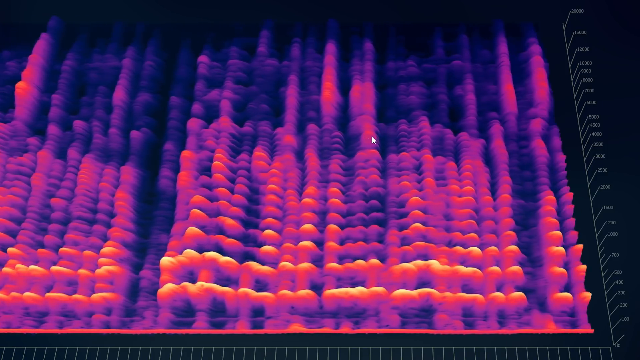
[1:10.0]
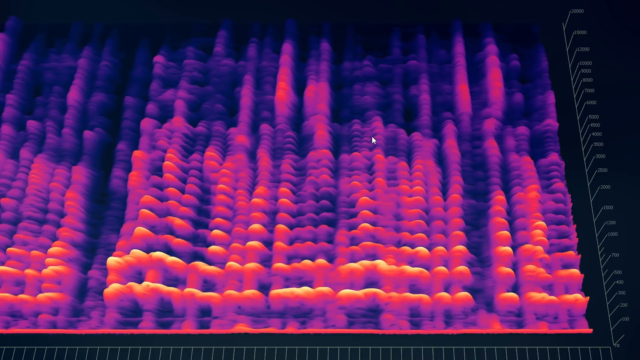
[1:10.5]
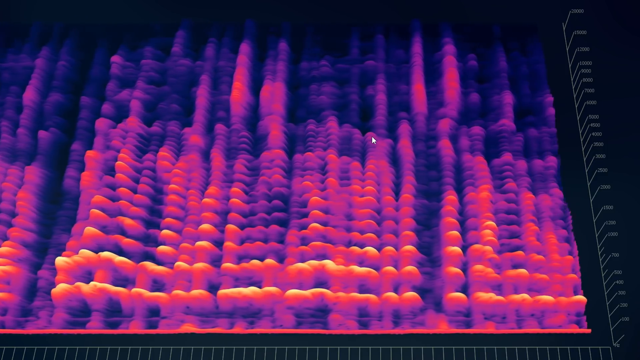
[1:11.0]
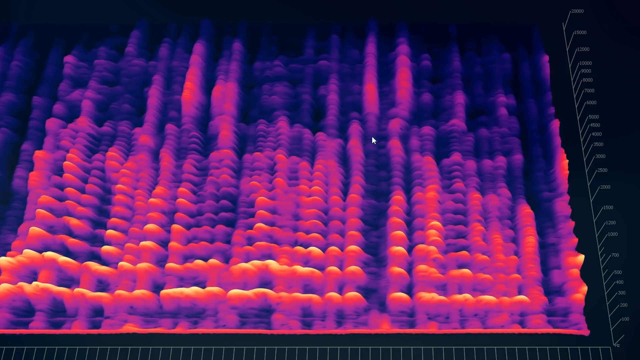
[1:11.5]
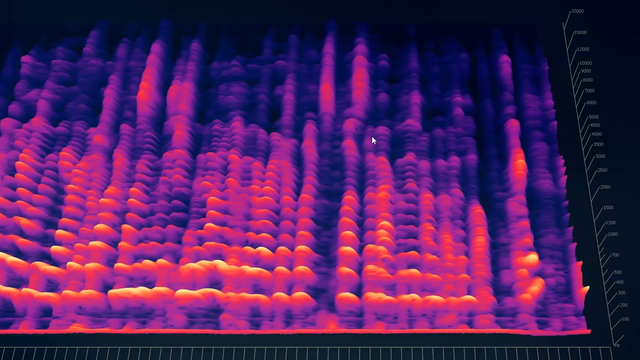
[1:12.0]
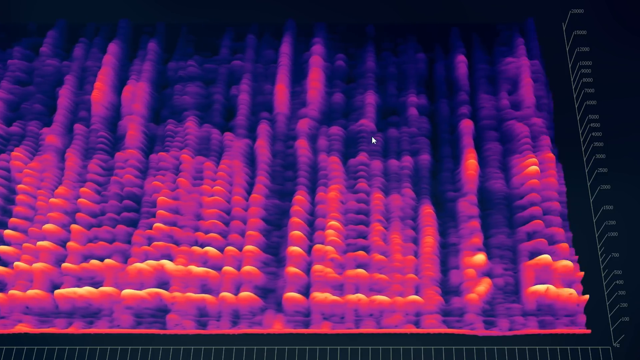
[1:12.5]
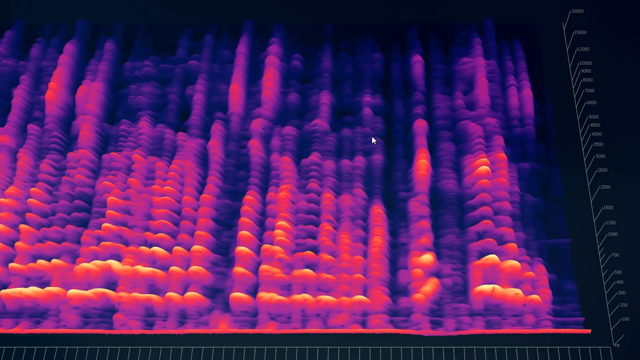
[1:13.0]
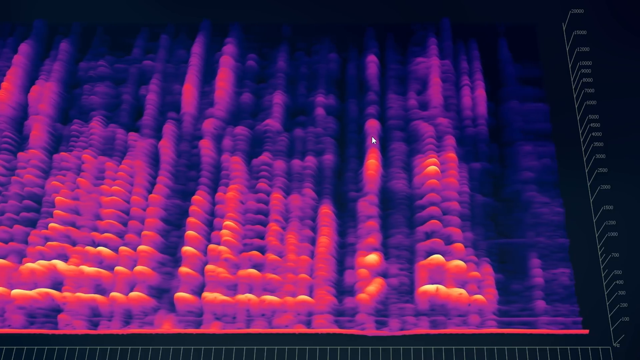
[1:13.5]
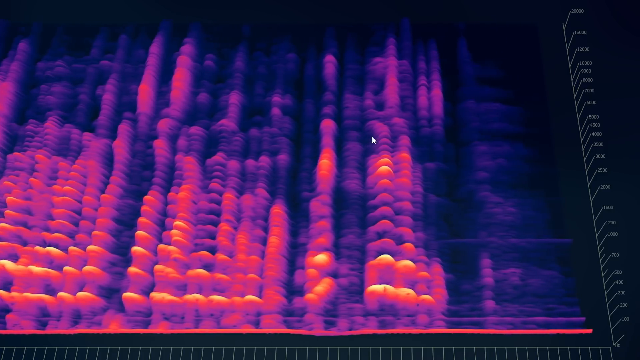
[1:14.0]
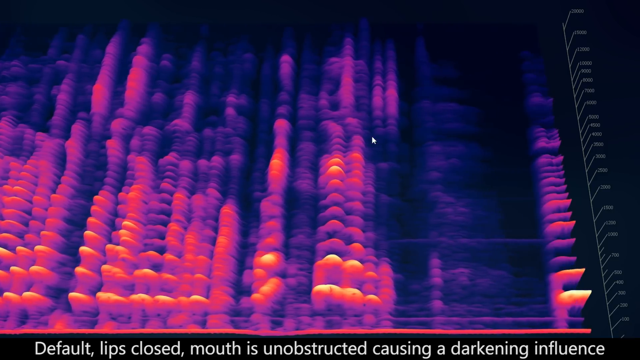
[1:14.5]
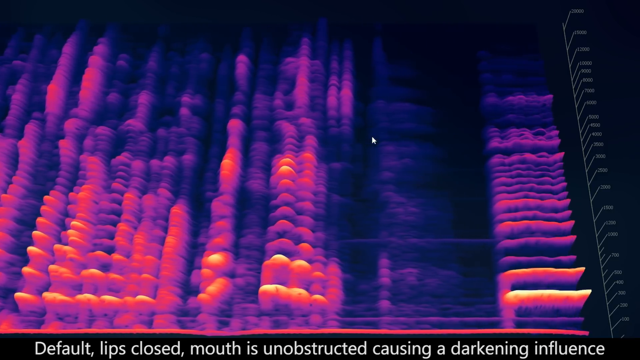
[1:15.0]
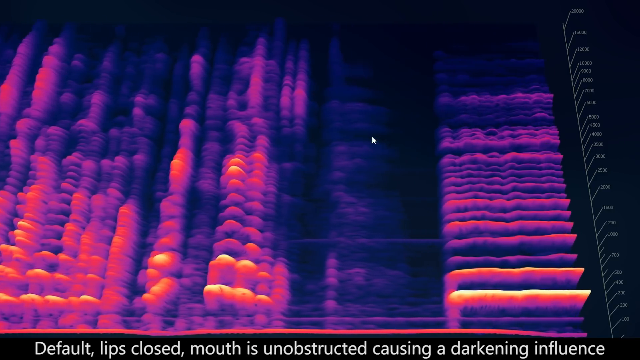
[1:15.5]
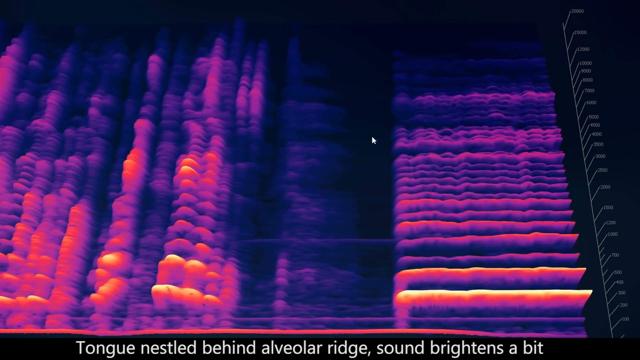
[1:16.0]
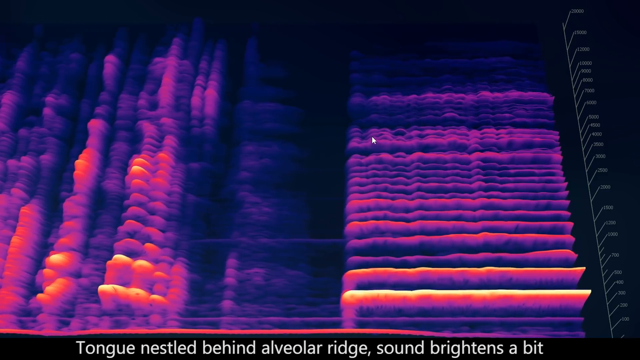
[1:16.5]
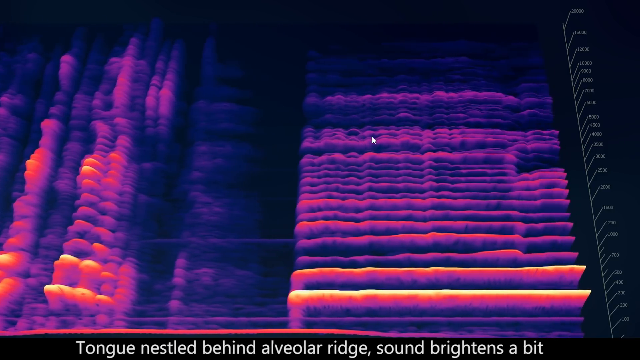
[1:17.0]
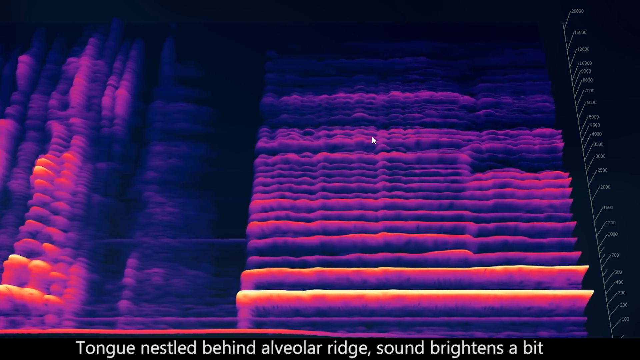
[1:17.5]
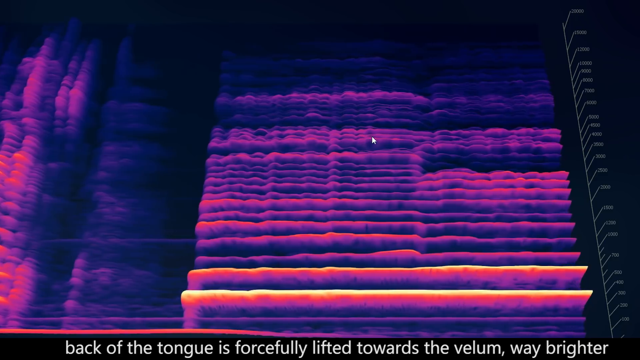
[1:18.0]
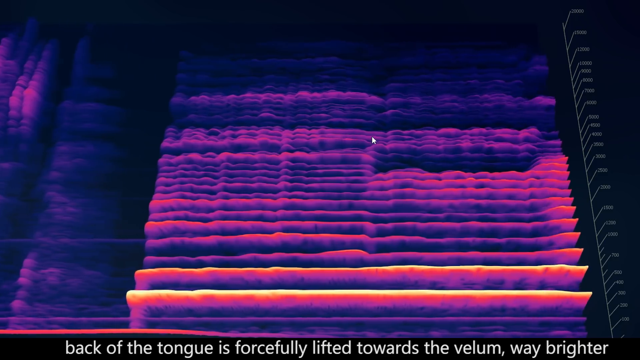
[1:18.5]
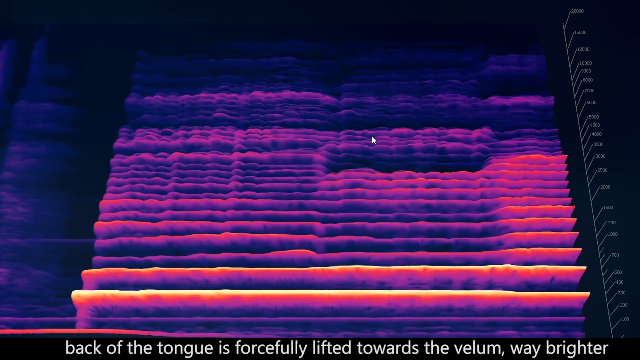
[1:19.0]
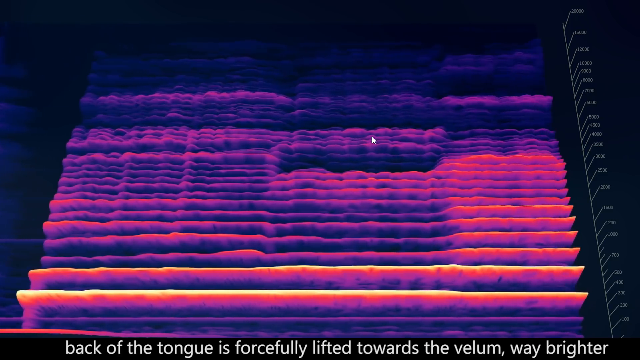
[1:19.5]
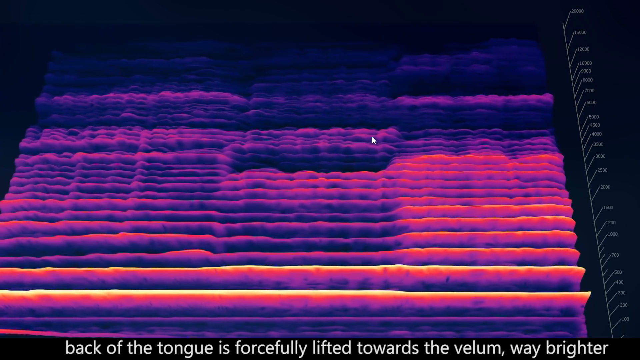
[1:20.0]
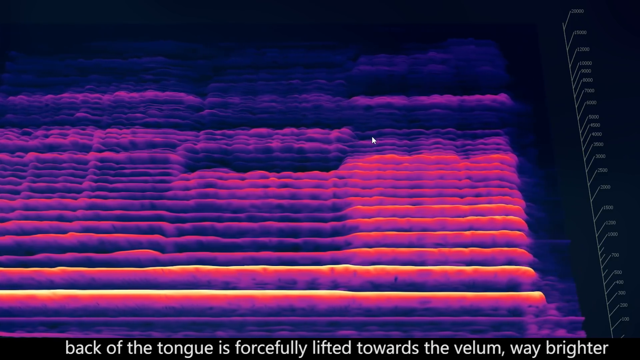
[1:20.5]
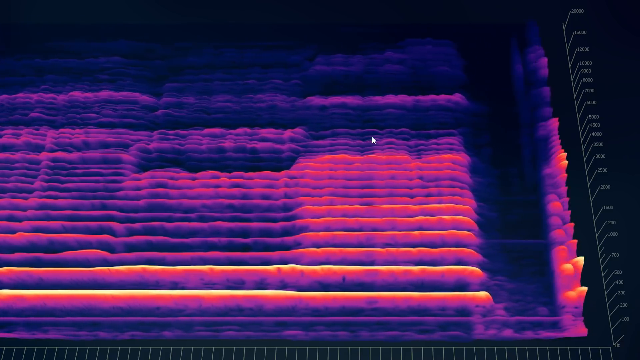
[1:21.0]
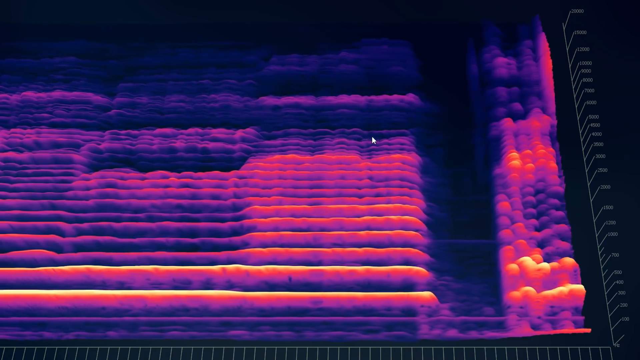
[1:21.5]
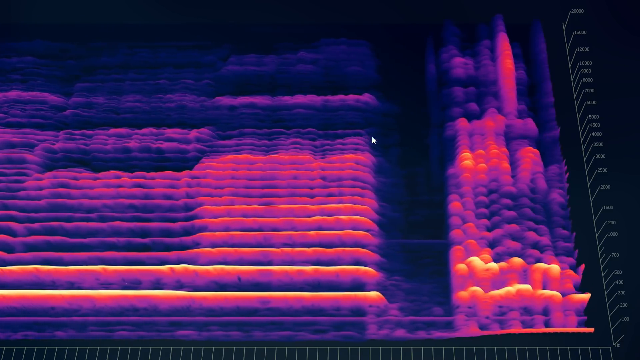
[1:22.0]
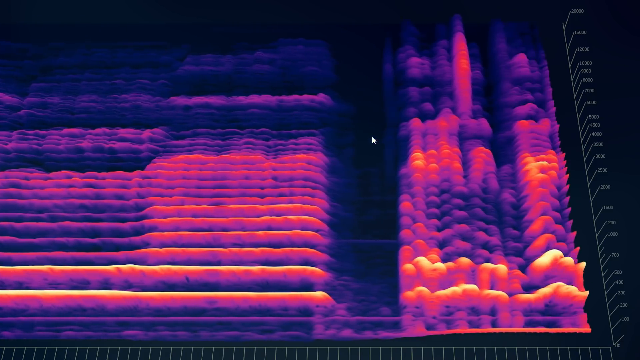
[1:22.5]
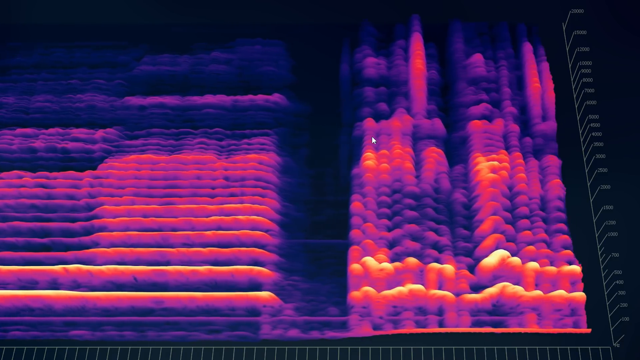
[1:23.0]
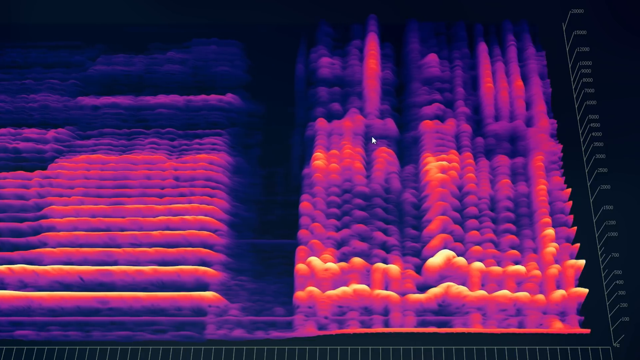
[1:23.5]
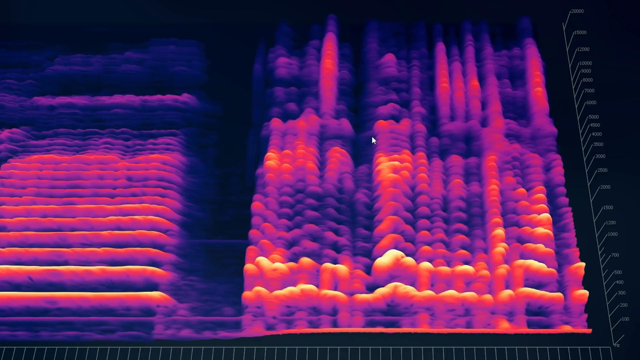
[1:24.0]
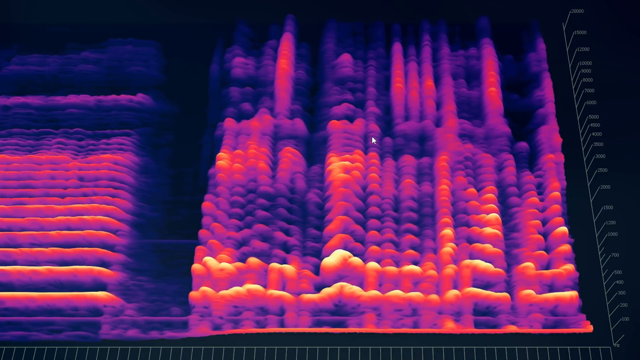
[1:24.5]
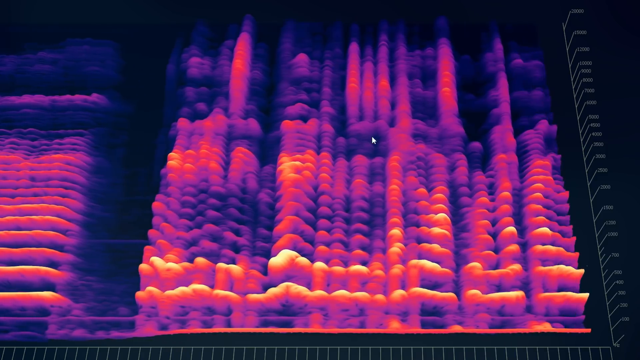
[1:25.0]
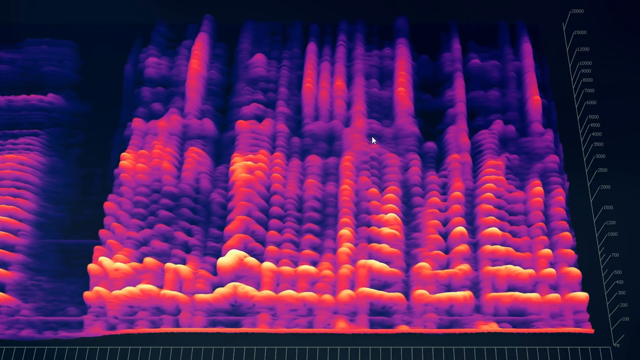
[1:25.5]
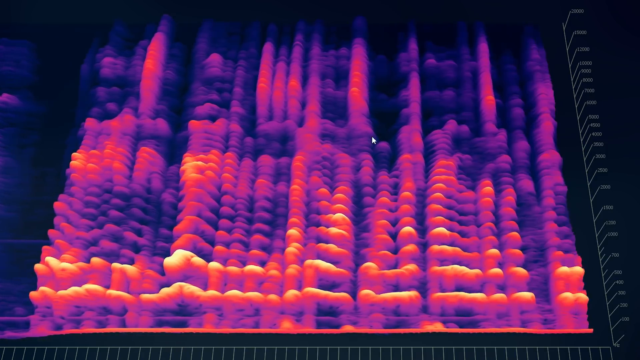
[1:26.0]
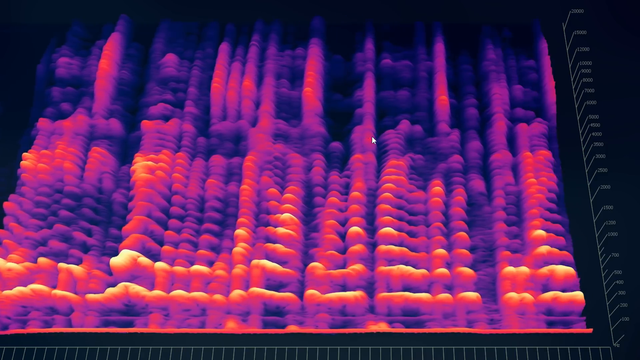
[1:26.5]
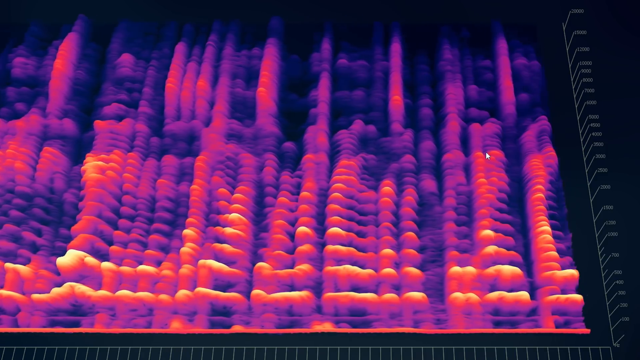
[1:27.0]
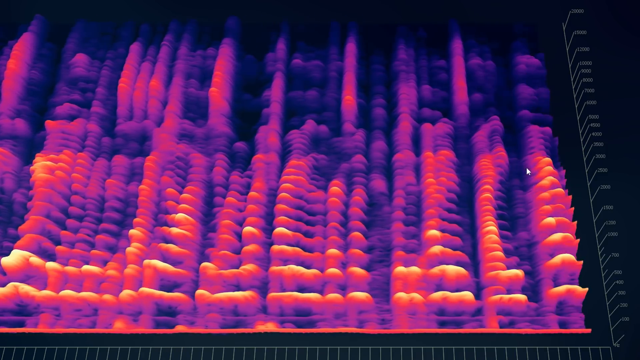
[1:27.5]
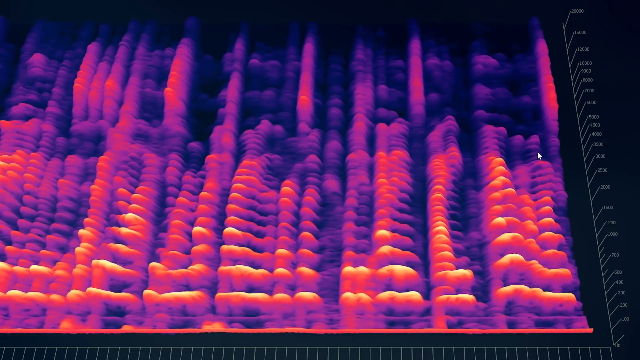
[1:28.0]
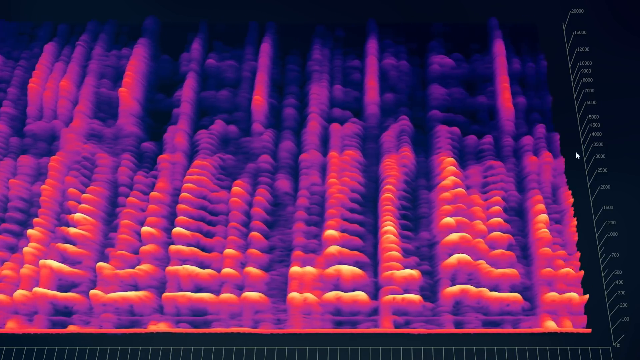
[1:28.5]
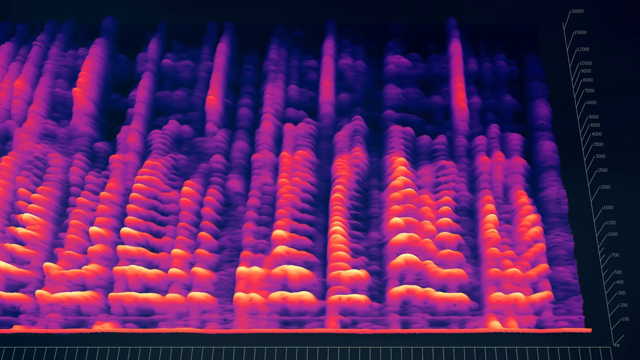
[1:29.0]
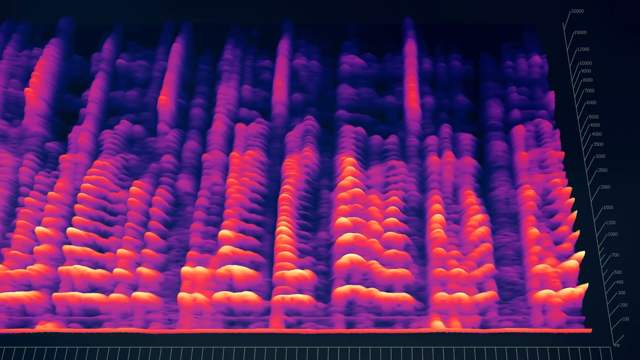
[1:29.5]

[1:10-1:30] Purple and orange-pink 3D bumps move from right to left beside a very large white line numbered from 100 to 20,000 in increments of 100. Text at the bottom reads "default lips closed mouth is unobstructed. causing a darkening influence. Tongue nestled behind alveolar ridge. Sound brightens a bit. Back of the tongue is forcibly lifted towards the velum. Way brighter." The computer mouse moves off to the right corner of the screen. Some of the bumps have dark shadows within them, the bumps are outlined in a long orange color, and there are black streaks along with streaks of orange and purple. The line's numbers include 100, 200, 300, 400, 500, 700, 1,000, 2,000, 2,500, 4,000 and 5,000.